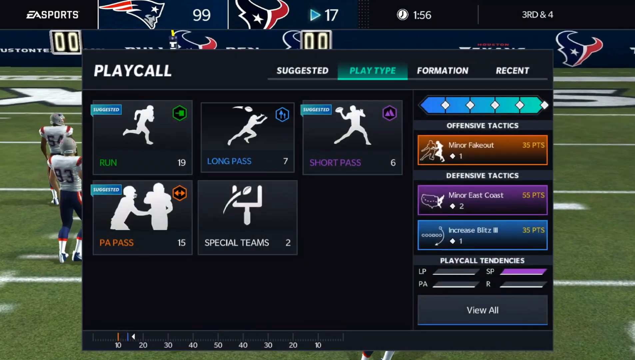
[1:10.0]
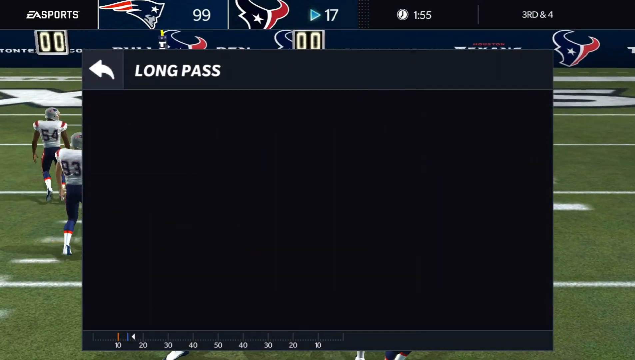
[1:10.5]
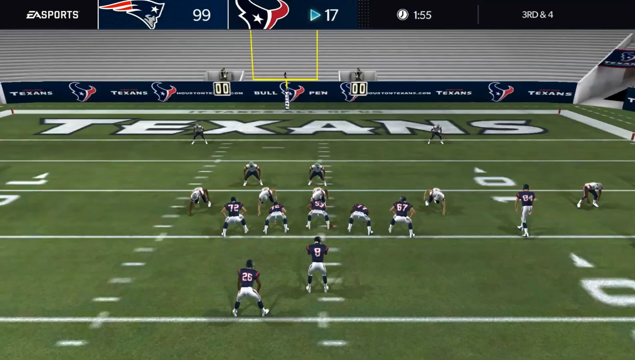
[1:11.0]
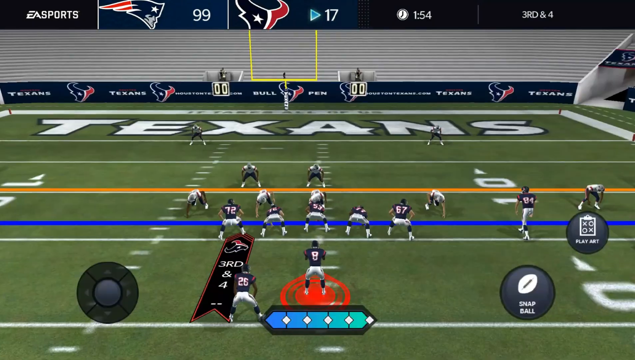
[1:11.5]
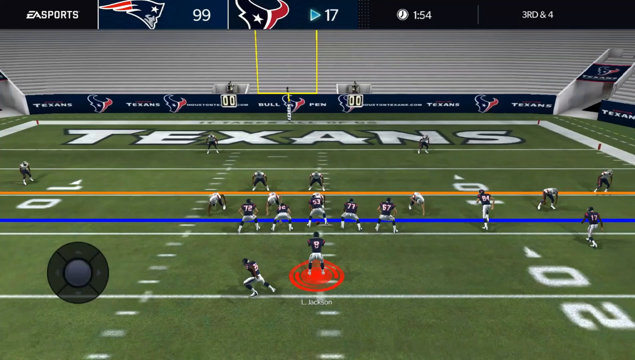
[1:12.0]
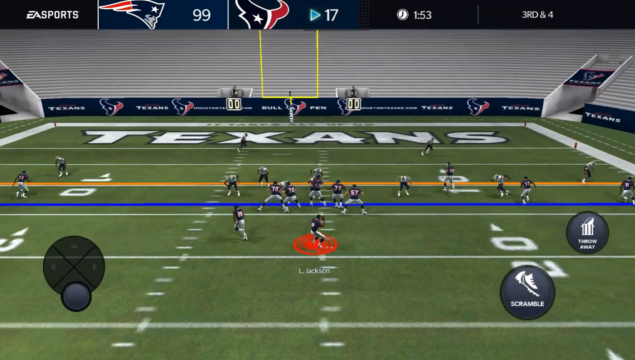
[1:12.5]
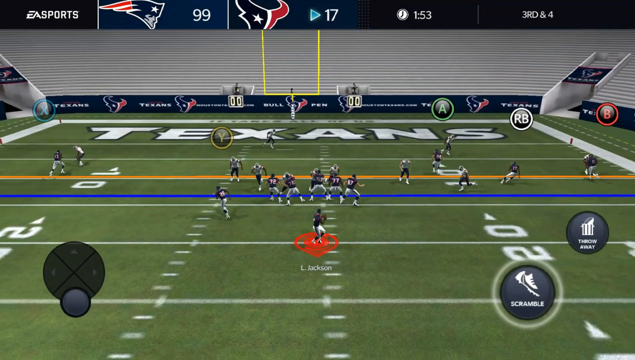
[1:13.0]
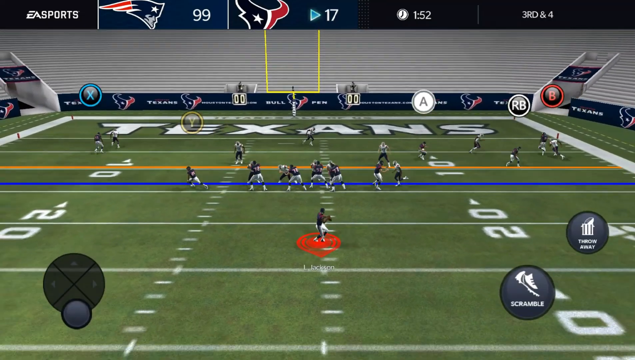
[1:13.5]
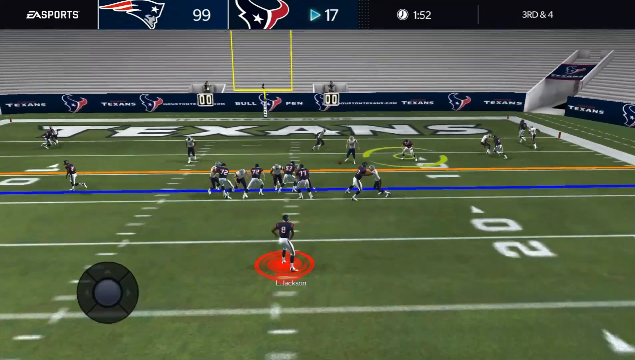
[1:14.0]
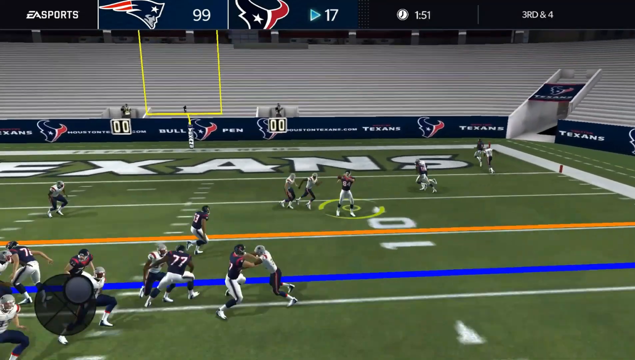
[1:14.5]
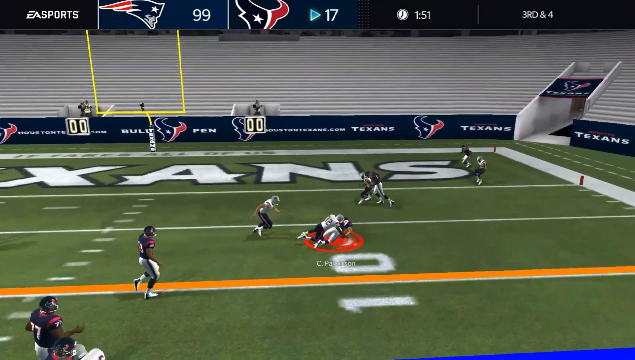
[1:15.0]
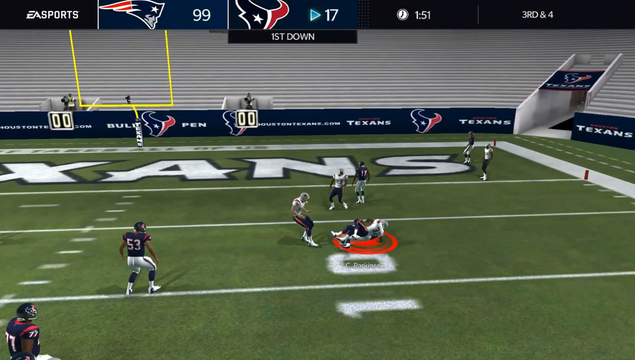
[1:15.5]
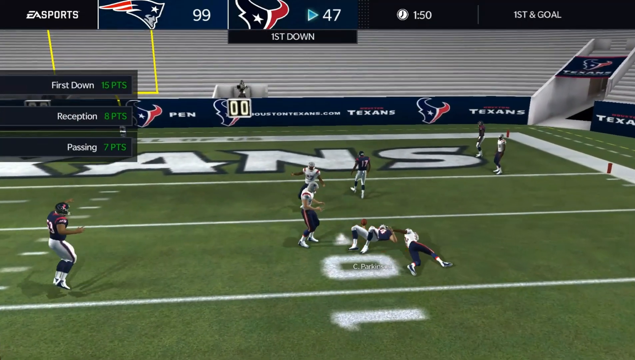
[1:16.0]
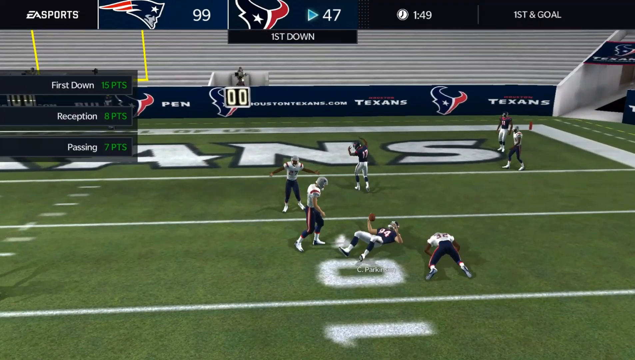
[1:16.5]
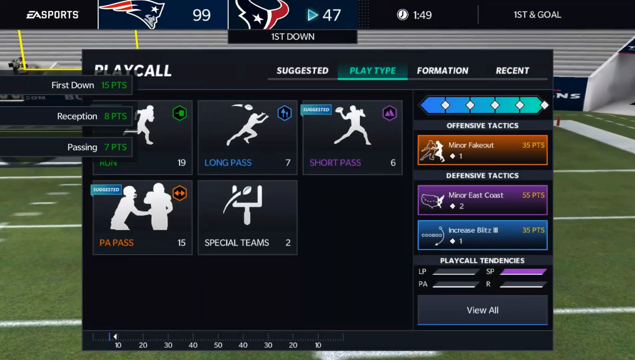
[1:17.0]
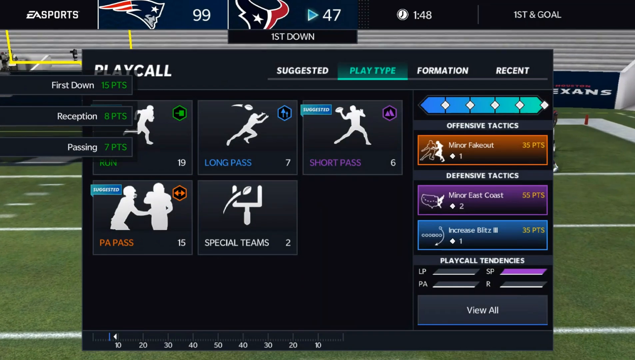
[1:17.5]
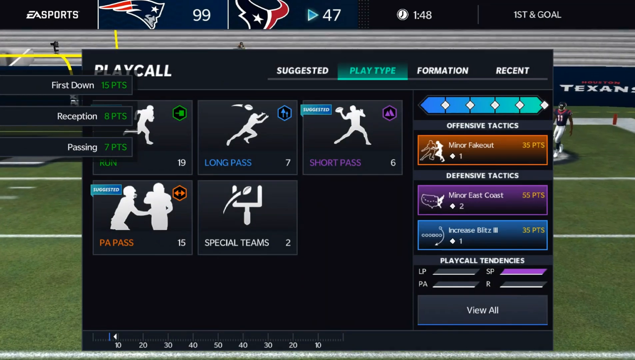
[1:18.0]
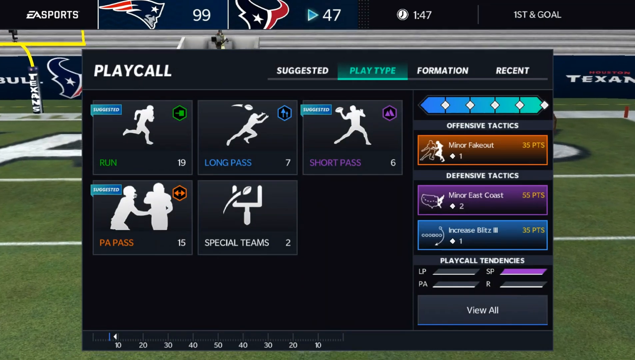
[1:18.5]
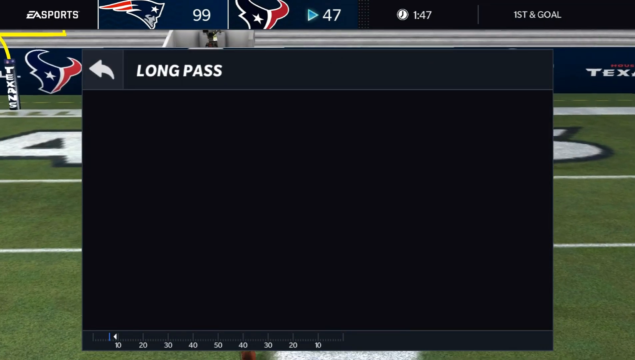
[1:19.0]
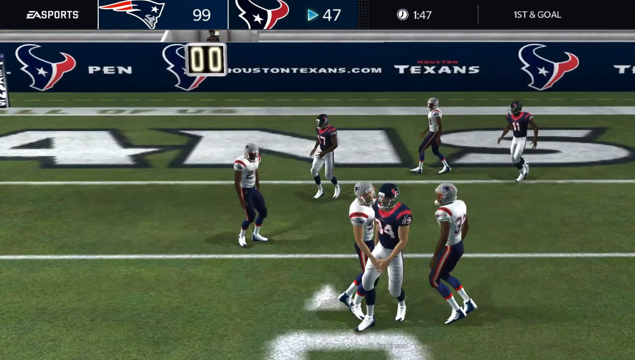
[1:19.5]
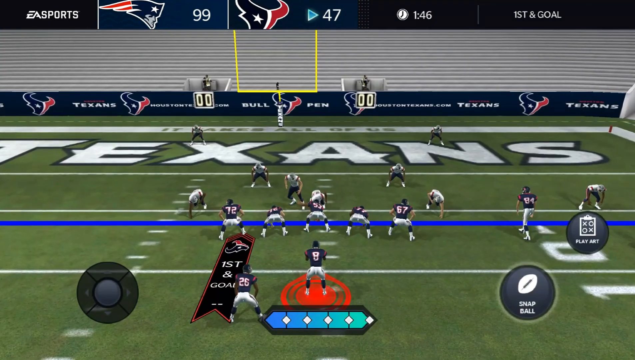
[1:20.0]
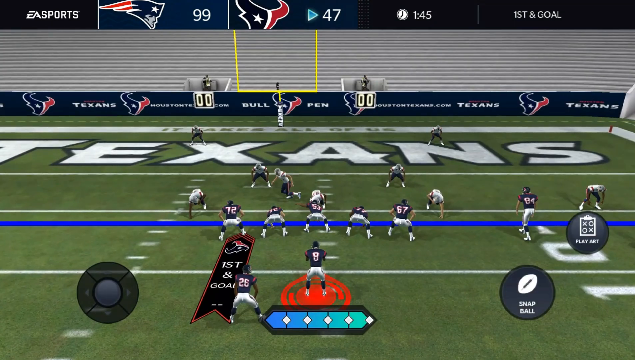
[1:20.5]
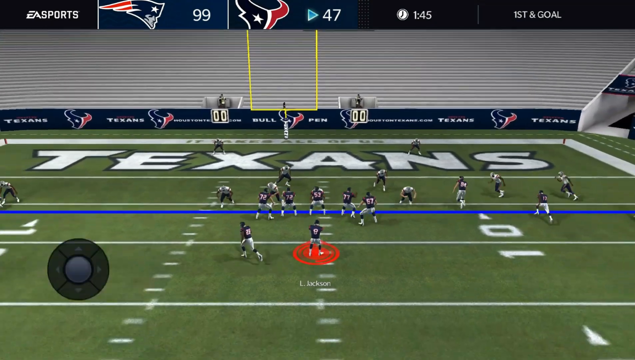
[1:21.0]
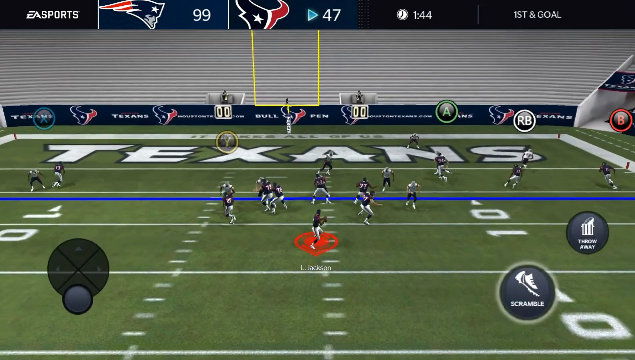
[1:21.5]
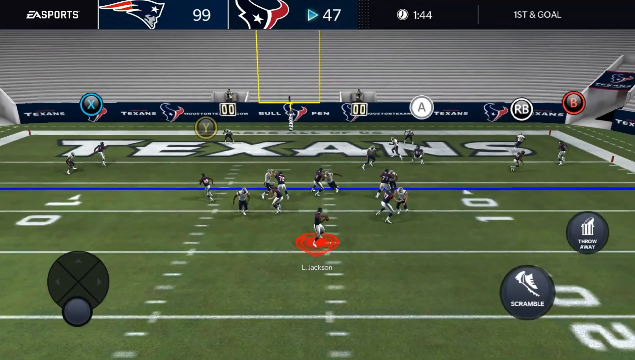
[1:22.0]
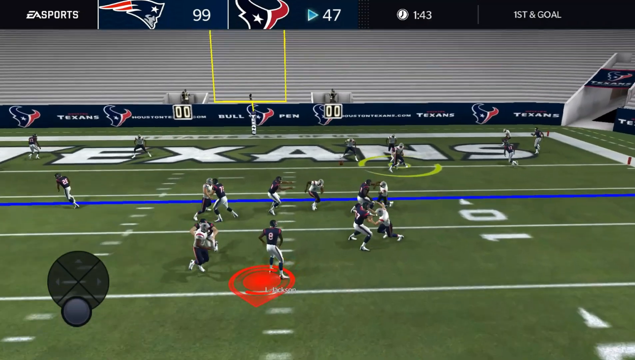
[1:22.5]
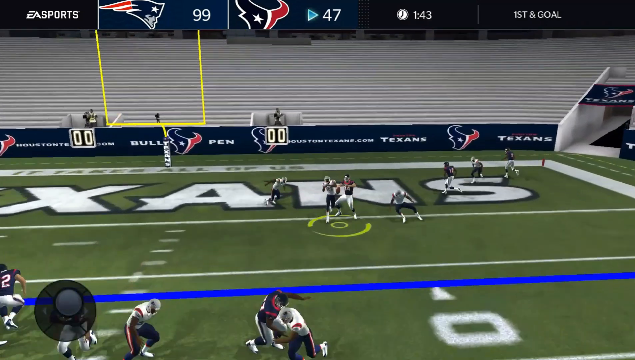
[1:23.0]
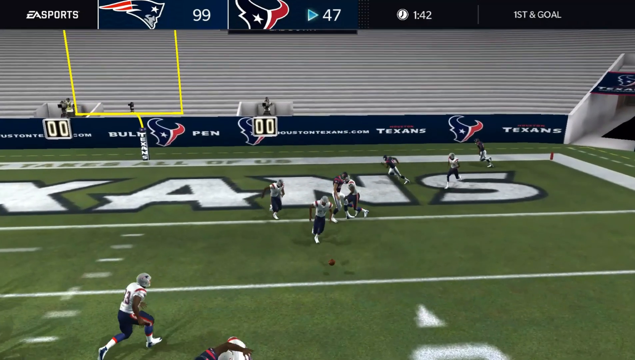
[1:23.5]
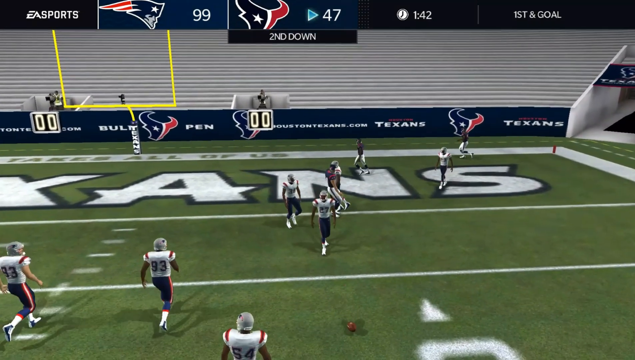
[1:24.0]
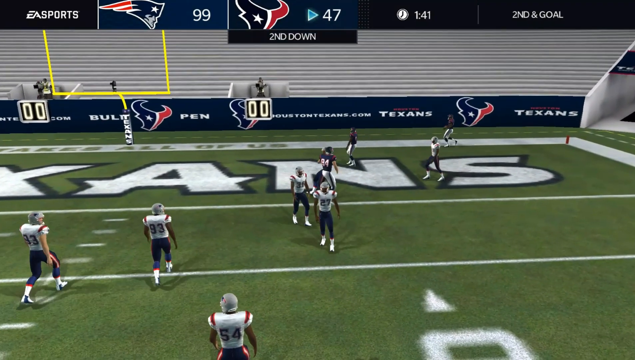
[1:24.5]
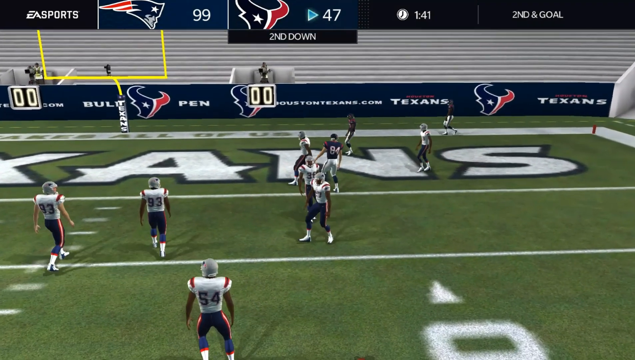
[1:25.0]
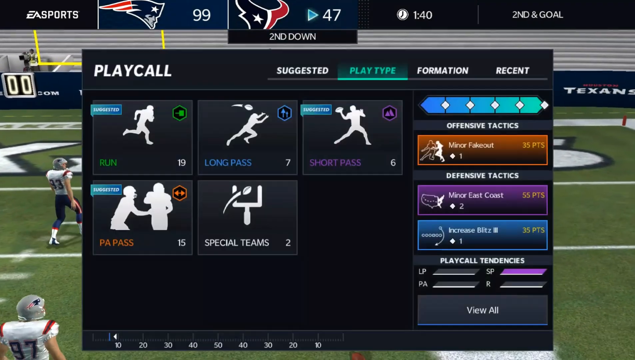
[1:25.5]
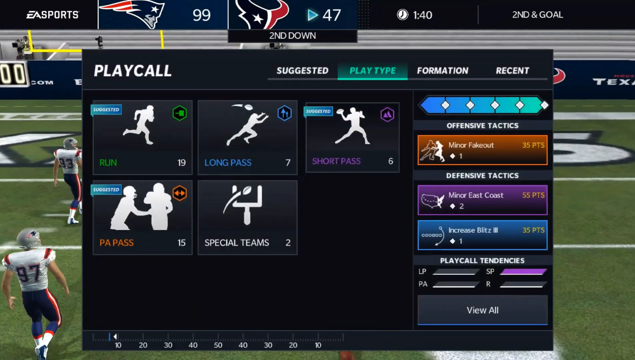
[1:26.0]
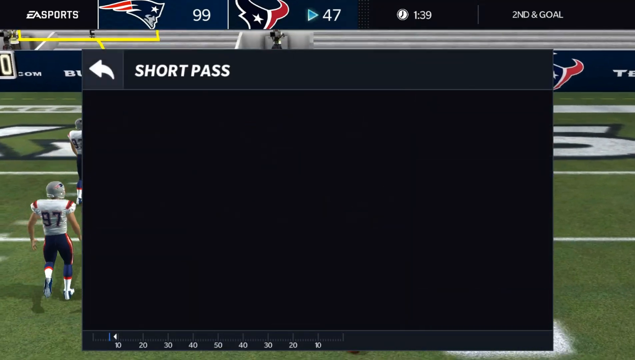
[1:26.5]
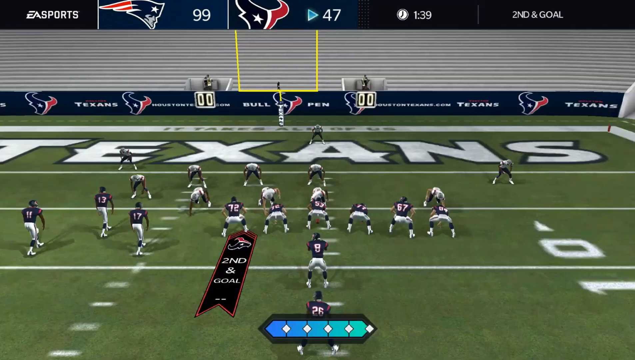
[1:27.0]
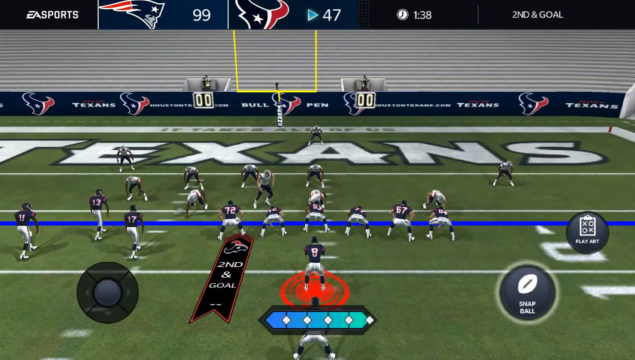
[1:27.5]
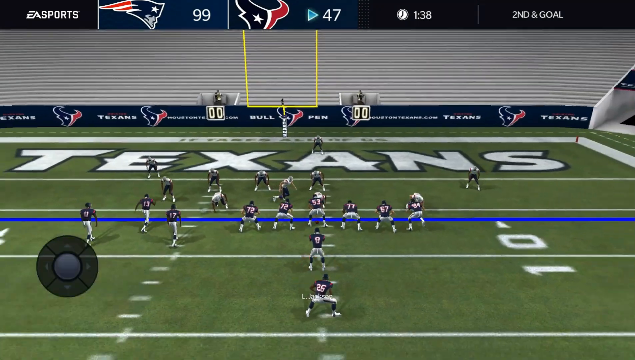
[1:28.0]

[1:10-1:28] The player selects strategies, choosing a long pass and then quickly tapping one of the passes. The cutscene of the players getting set up is skipped, and the play starts at what seems to be the 15-yard line, very close to the end zone. The score is listed as 99 to 17, with the player having only 17 points. It is third and fourth with 1 minute 53 seconds, and the ball is thrown to another player who is immediately tackled. The play call menu opens, and the player chooses a long pass but does not look at what is selected afterward, suggesting the player might be getting frustrated. The setup starts quickly while buttons are constantly being pressed, and the player selects one of the controlled characters using the A button to throw the ball. The ball is intercepted and thrown to the ground by the opposing team.